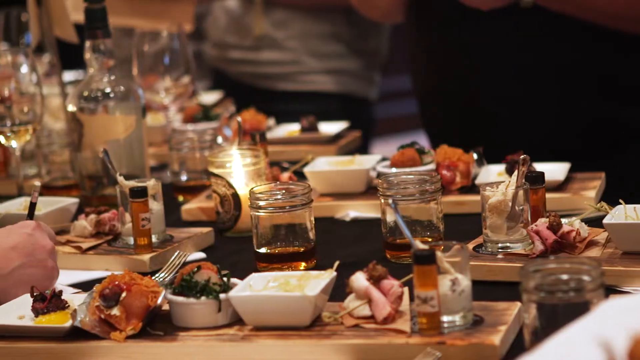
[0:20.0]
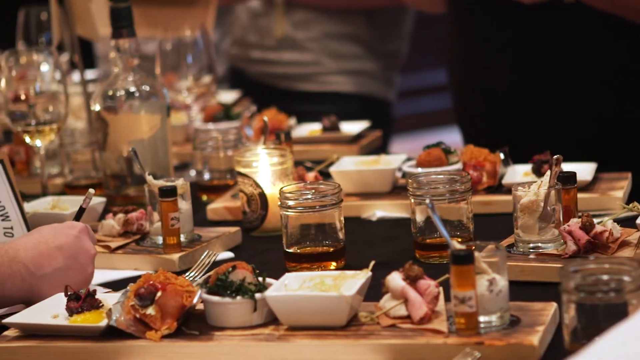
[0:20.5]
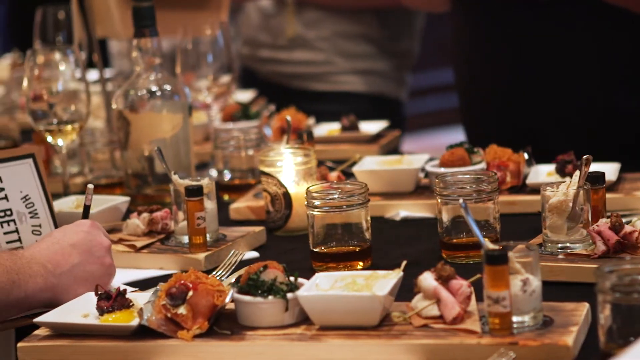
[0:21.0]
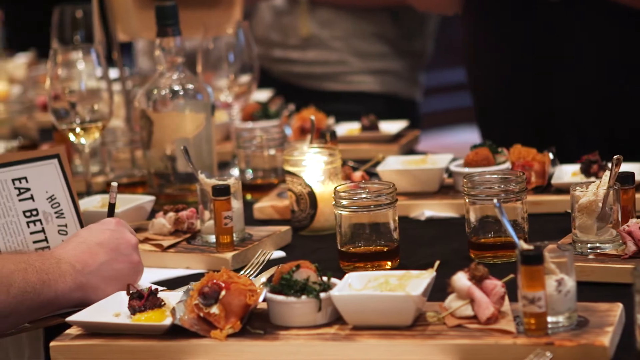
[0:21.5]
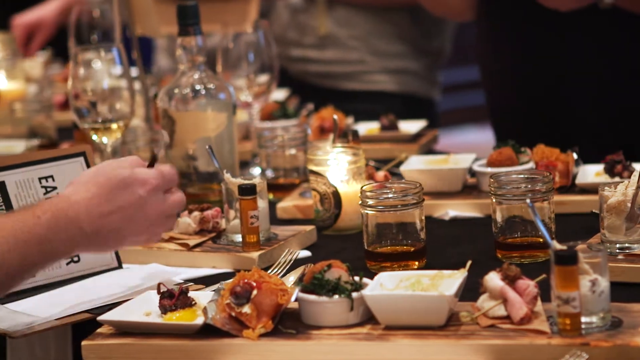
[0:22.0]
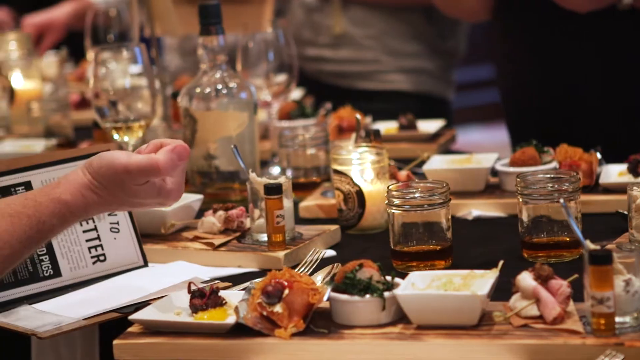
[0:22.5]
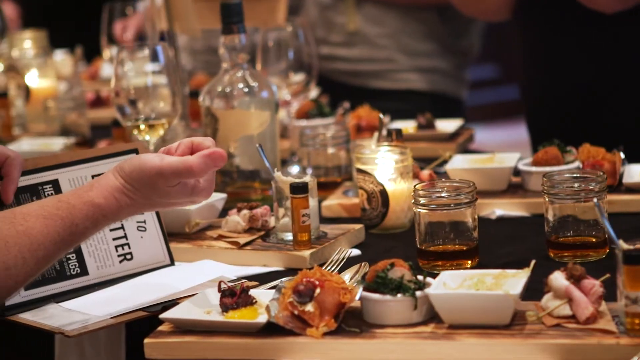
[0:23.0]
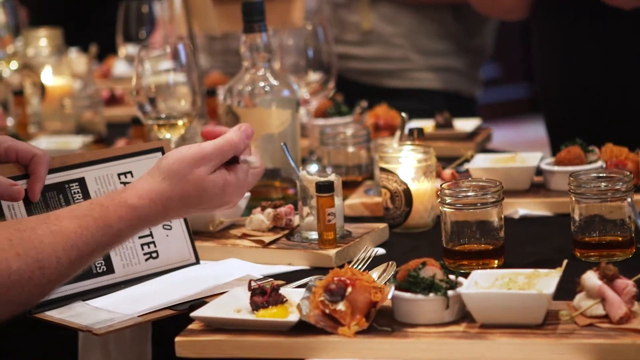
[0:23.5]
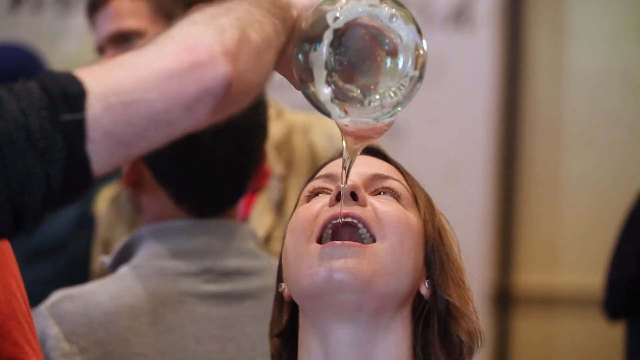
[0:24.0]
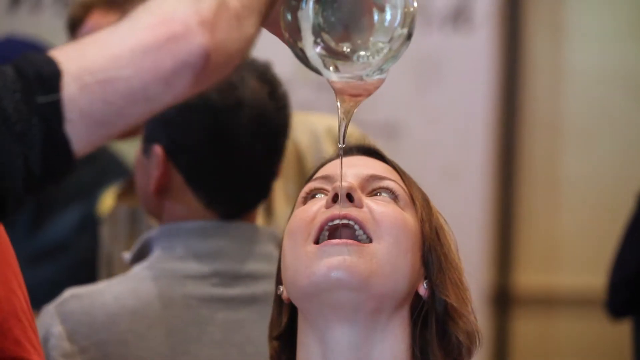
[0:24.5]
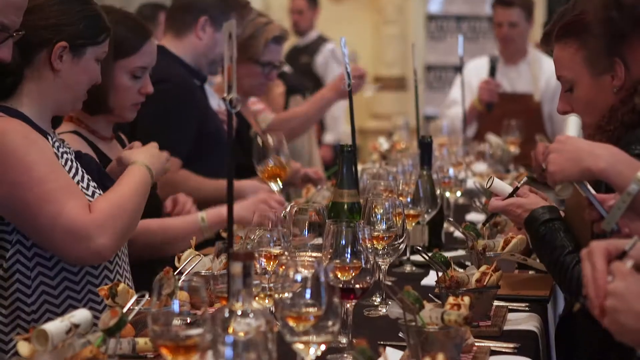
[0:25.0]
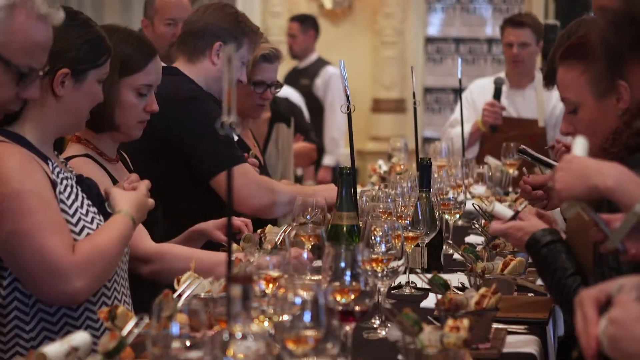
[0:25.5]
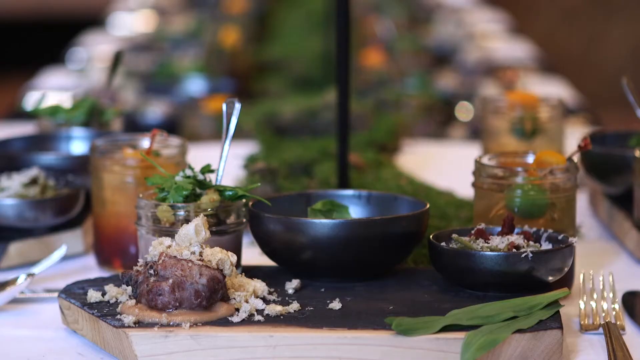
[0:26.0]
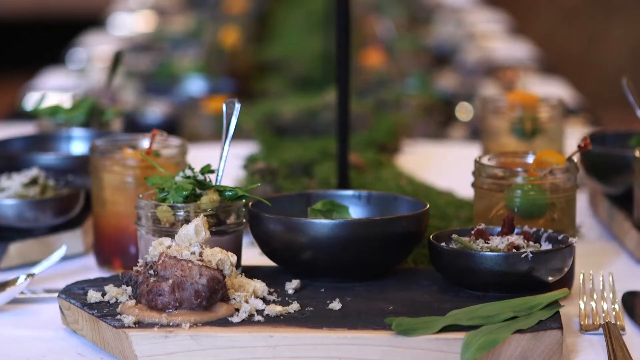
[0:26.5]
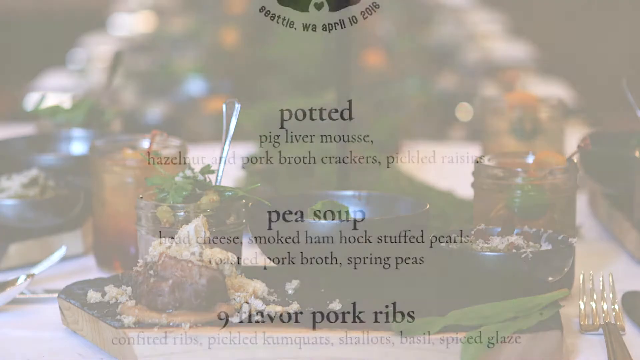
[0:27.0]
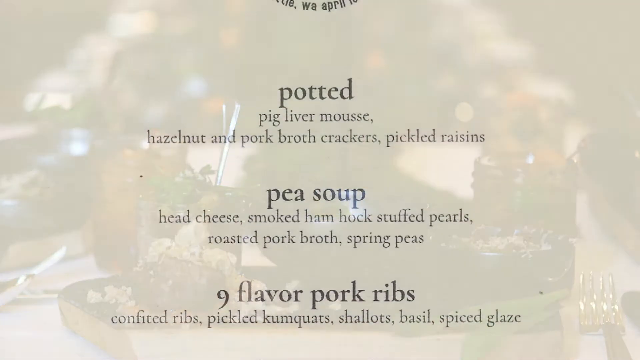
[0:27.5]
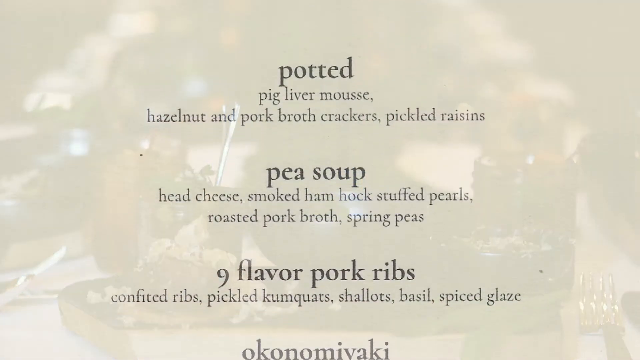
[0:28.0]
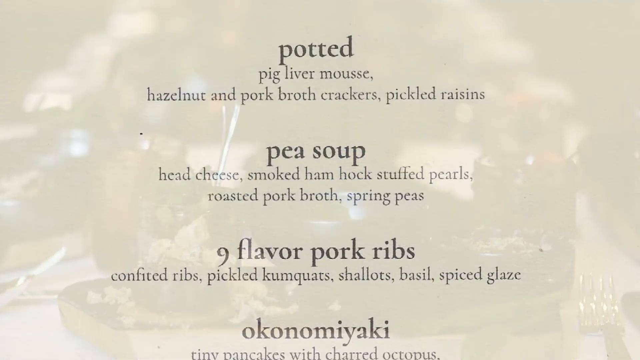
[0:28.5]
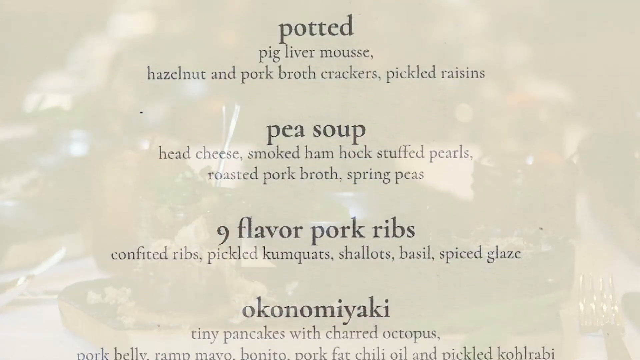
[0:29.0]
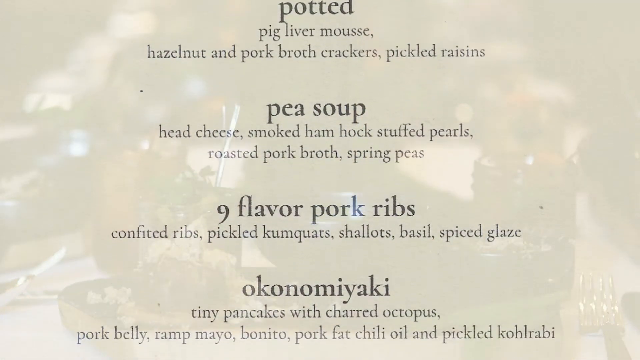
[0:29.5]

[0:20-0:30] A big table holds some meats, and other people sit across the stairwells. There are some big glasses of water, and someone writes something on paper. A list of food items appears, including pork broth, crackers, pickled raisins, pea soup, smoked ham, roasted pork broth, spring peas, pork ribs, shallots and spice glaze, along with another entry reading okonomiyaki.